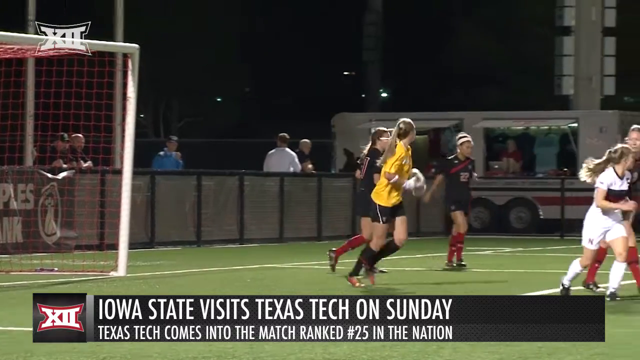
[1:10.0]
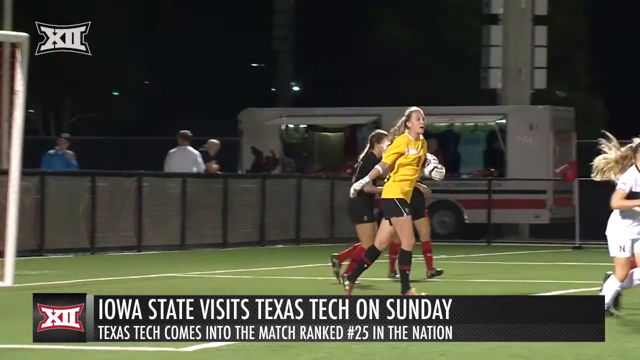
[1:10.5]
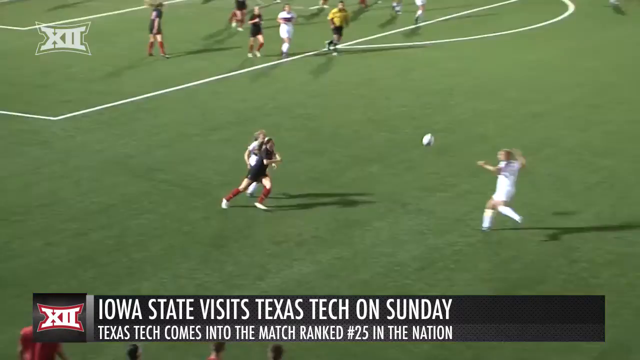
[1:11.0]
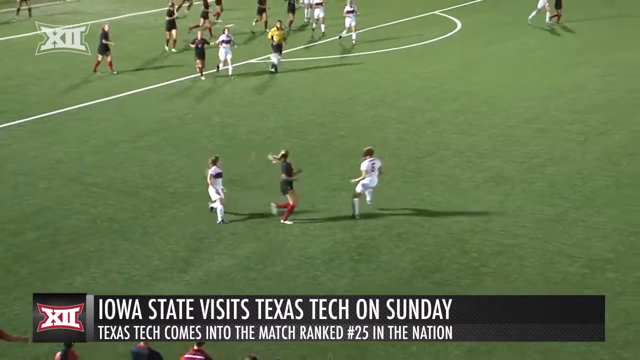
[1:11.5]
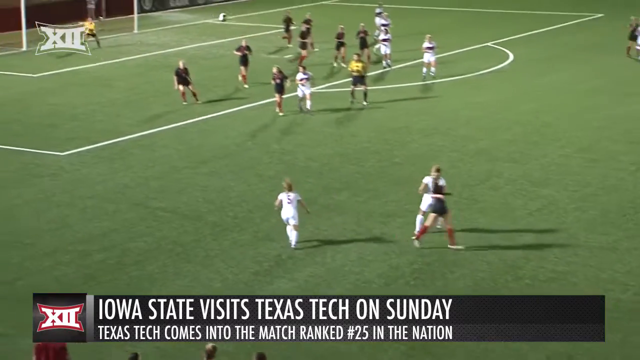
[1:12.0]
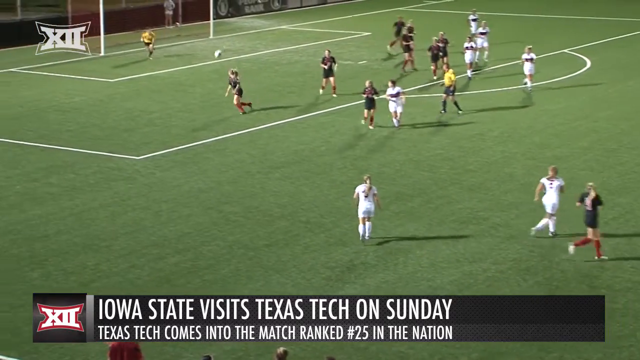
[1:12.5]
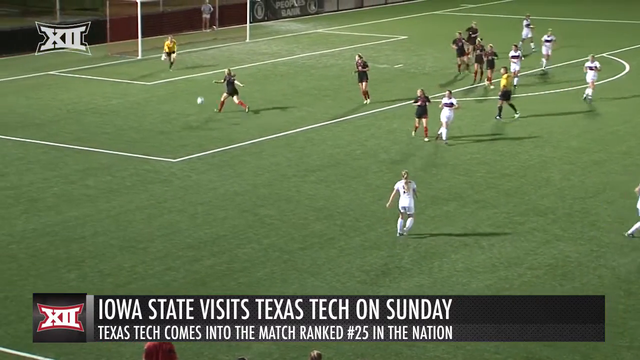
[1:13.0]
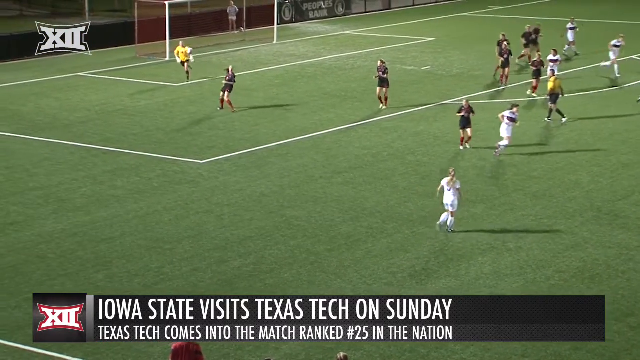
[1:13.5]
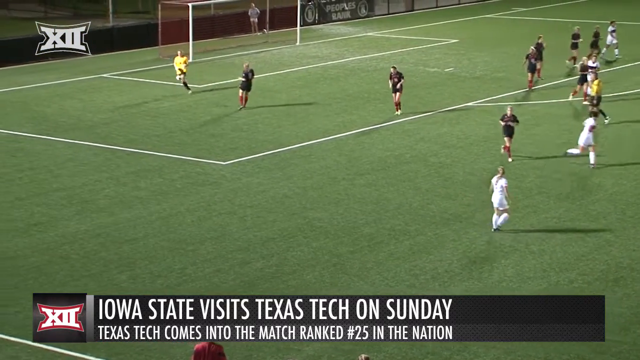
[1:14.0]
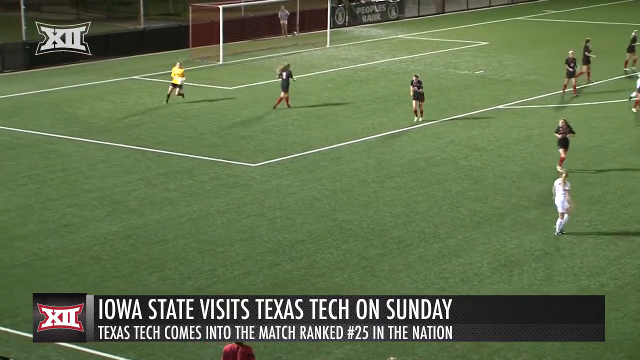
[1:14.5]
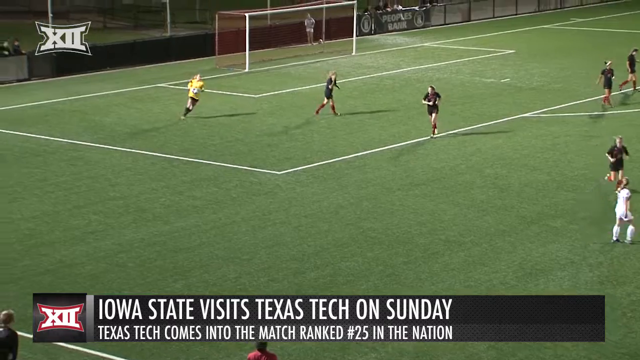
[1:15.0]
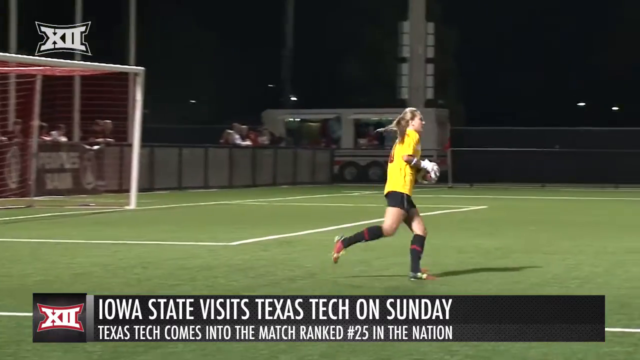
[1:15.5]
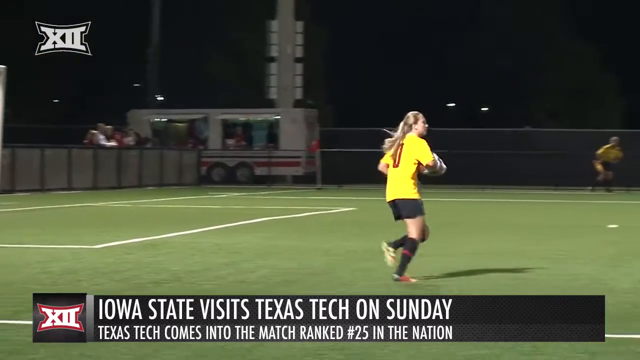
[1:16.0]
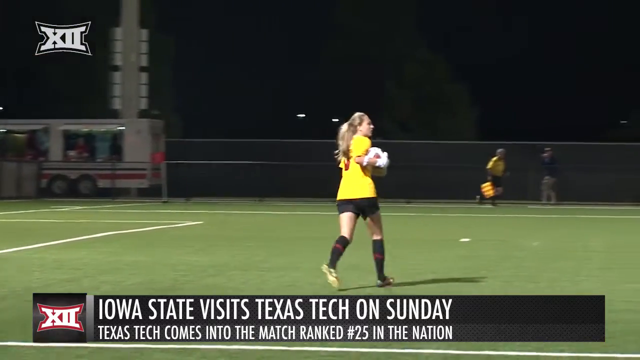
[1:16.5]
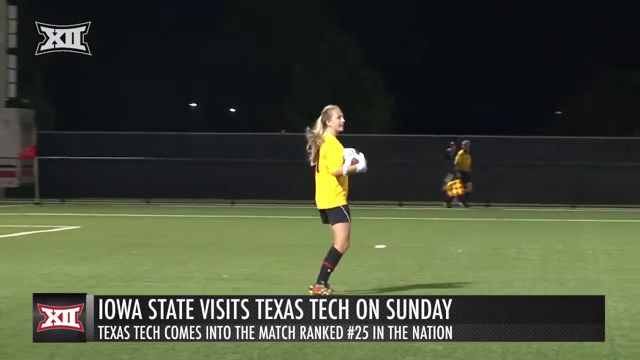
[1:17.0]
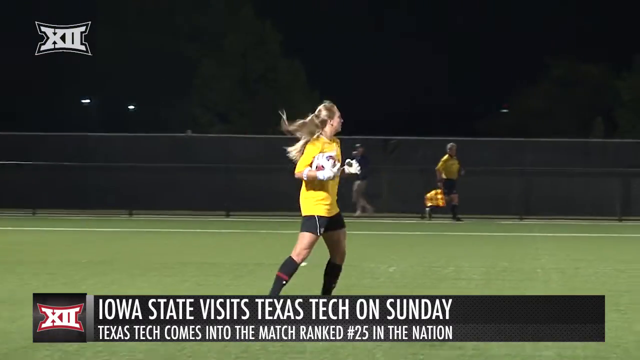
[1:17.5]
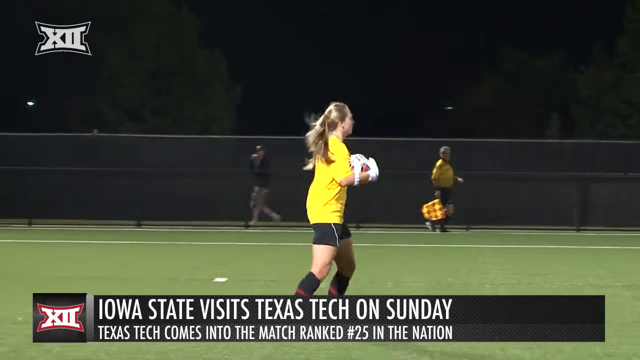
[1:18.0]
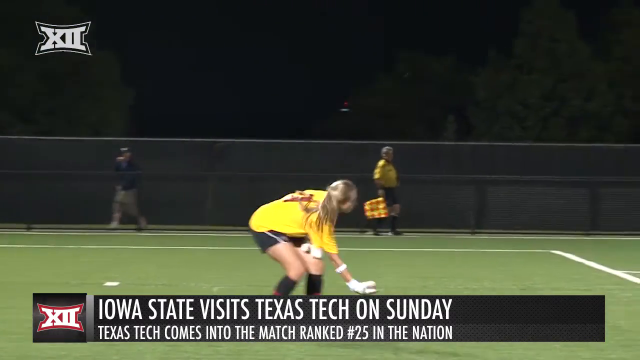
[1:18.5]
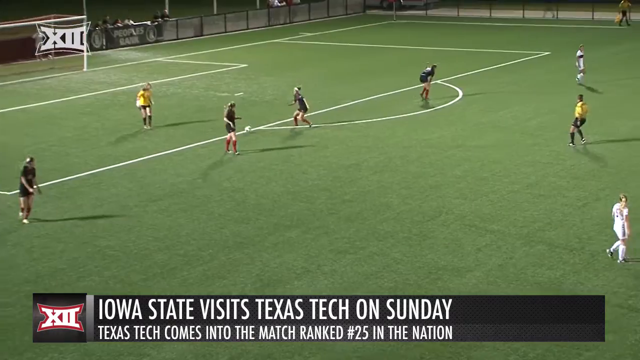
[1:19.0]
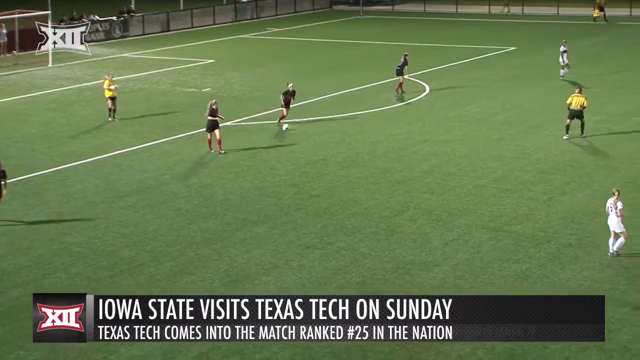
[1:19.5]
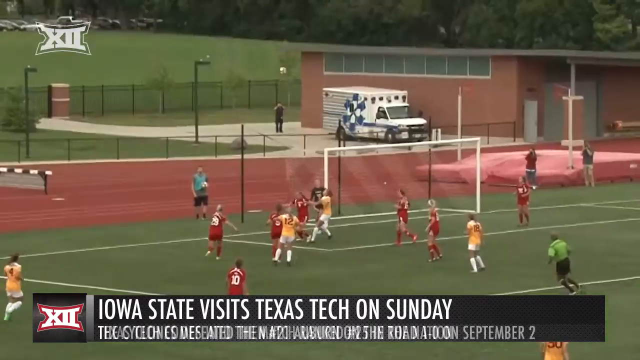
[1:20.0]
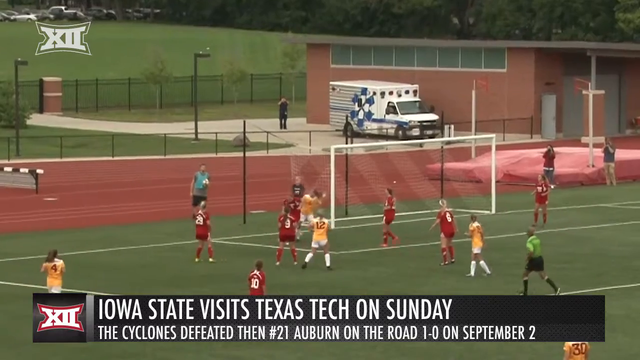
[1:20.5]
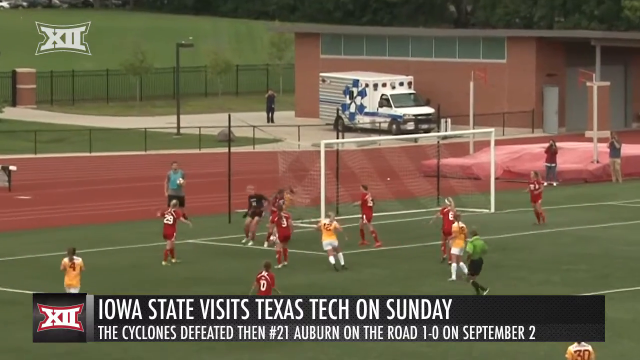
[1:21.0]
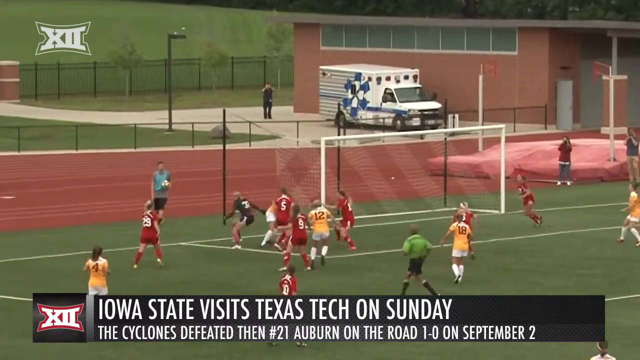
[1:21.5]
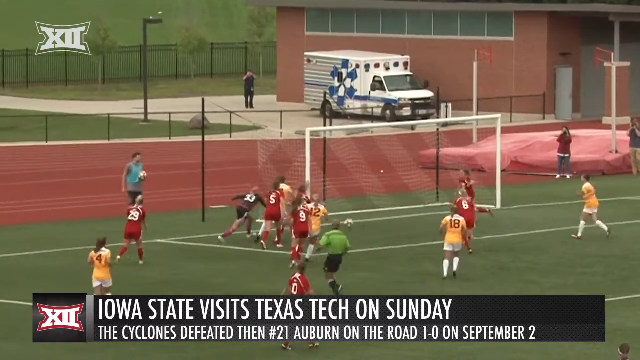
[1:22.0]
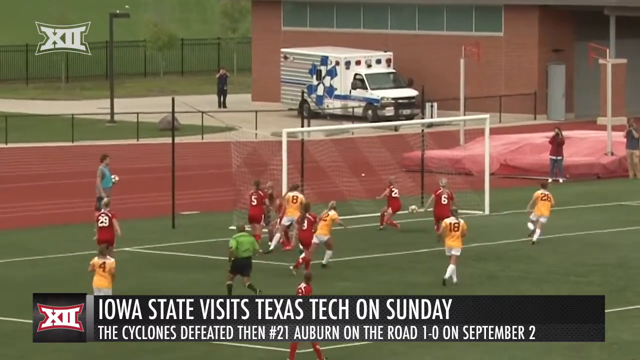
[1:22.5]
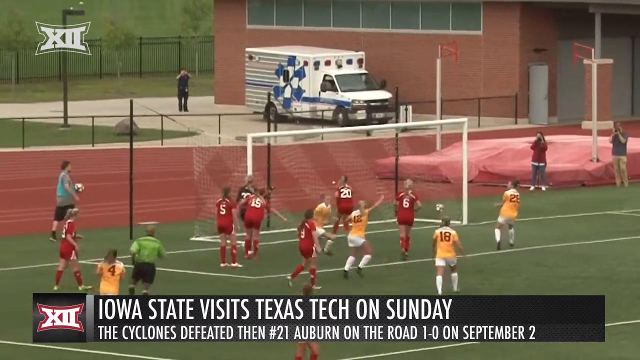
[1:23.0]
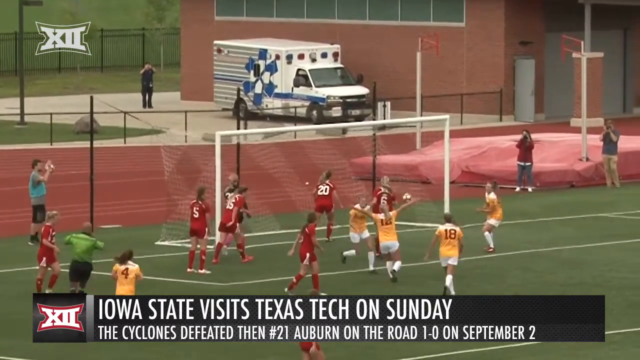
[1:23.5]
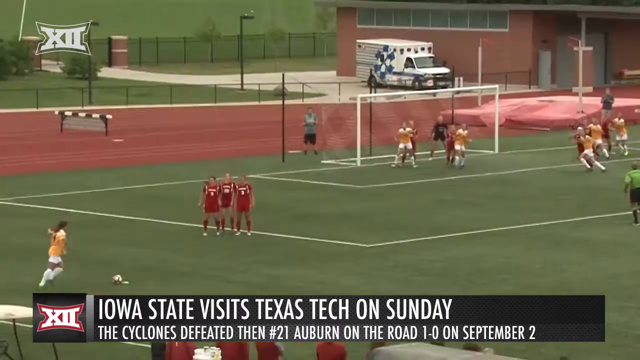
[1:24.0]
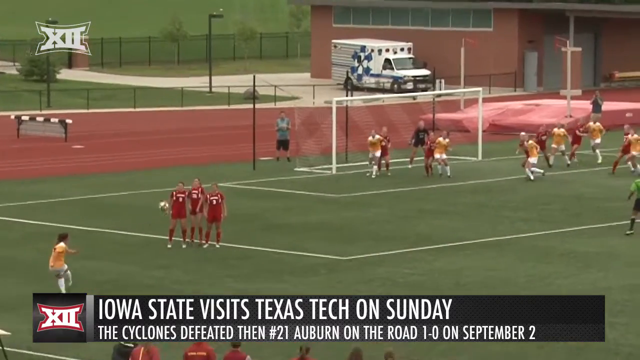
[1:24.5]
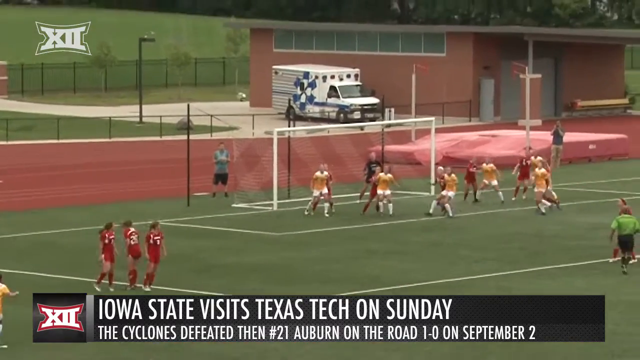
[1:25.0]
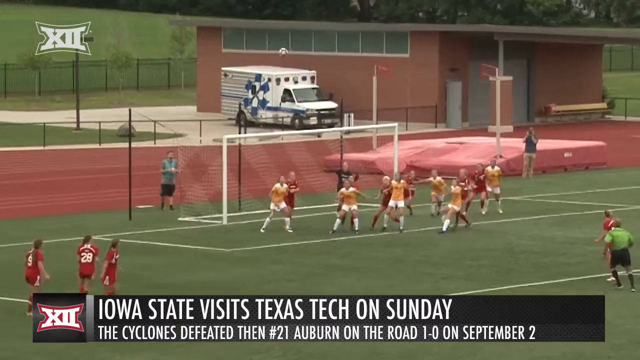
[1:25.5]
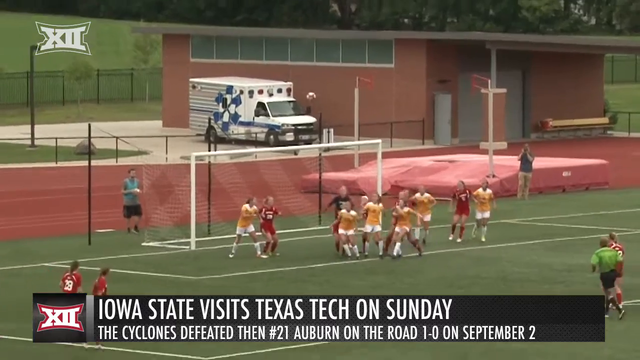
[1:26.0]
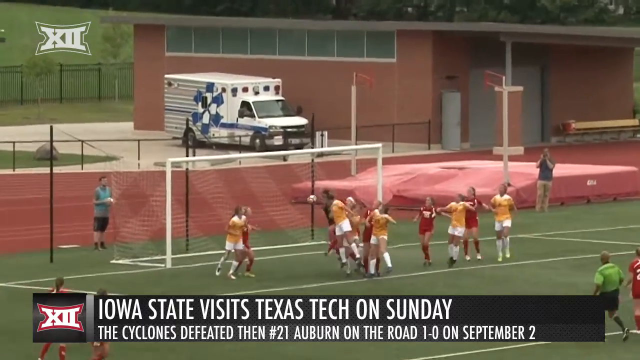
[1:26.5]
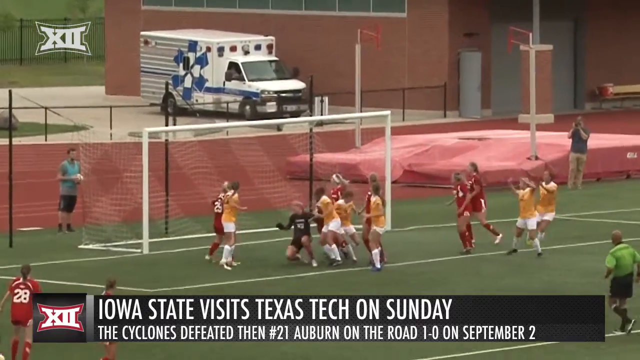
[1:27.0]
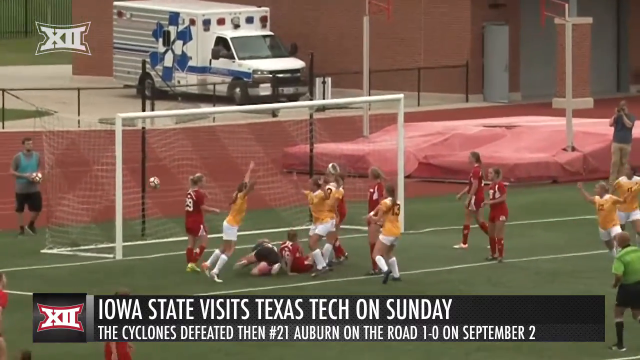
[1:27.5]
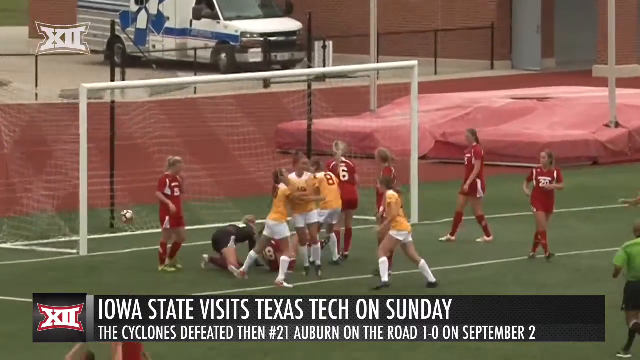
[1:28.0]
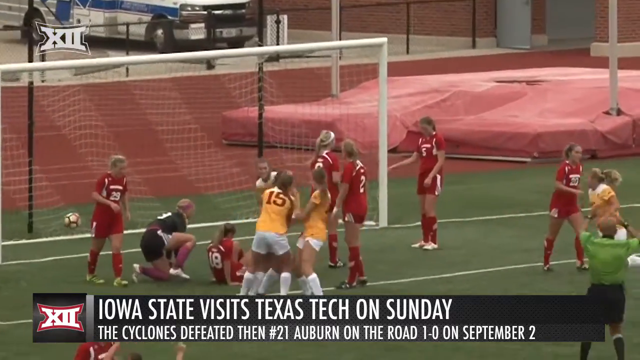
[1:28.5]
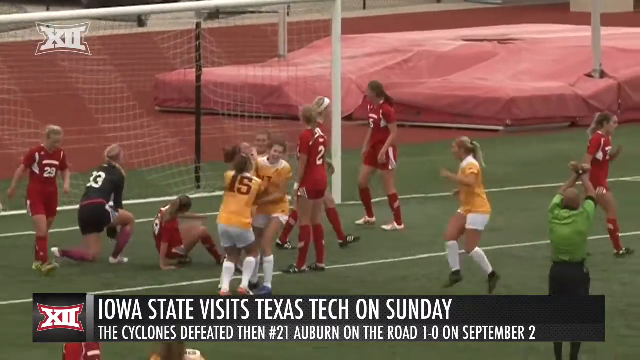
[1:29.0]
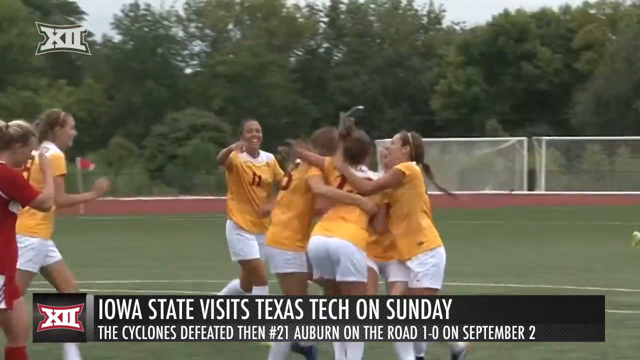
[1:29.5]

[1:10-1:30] A game is shown at nighttime. Text reads "Iowa State visits Texas Tech on Sunday" and "Texas Tech comes into the match ranked number 25 in the nation". Different players are shown: one team wears red and white, and the other wears what looks like a yellowish, yellow-orange color. The camera zooms in on the yellowish jersey team, whose numbers are red. It is unclear which team is Iowa State and which is Texas Tech.